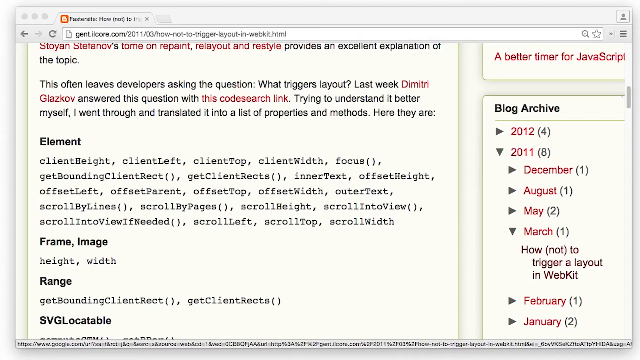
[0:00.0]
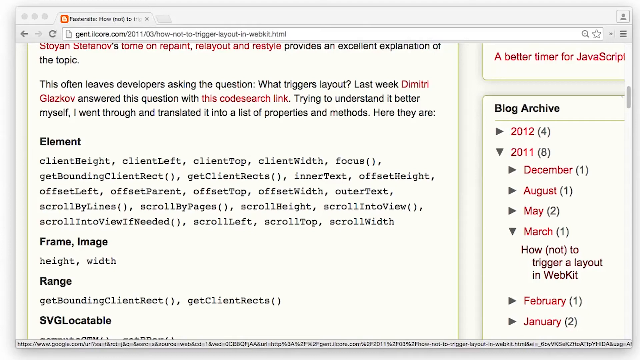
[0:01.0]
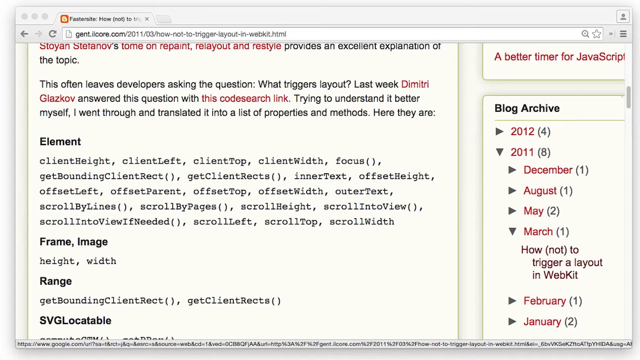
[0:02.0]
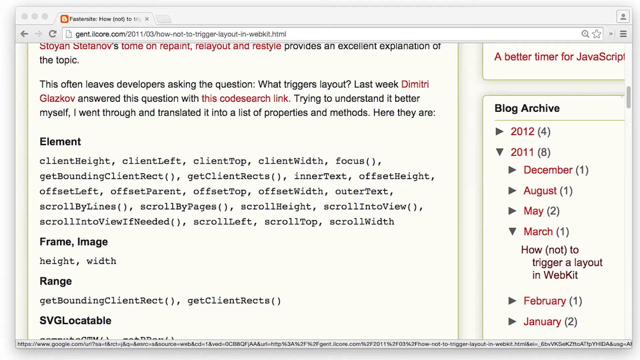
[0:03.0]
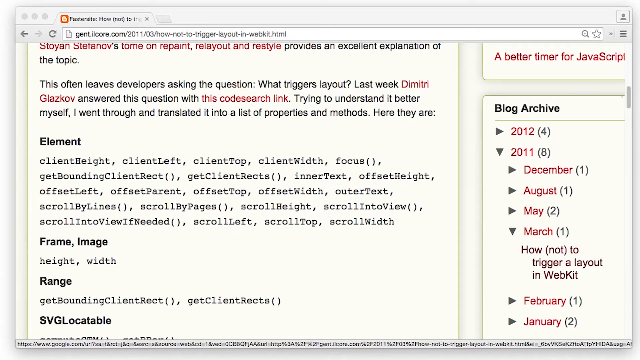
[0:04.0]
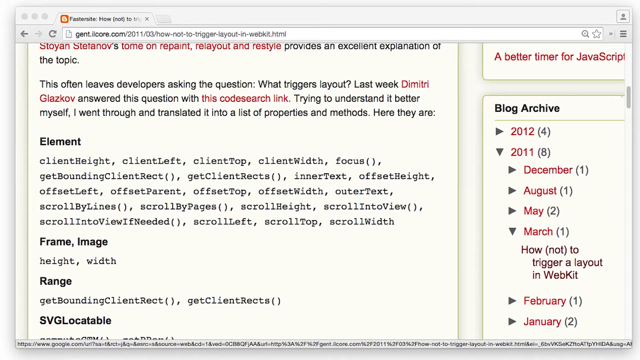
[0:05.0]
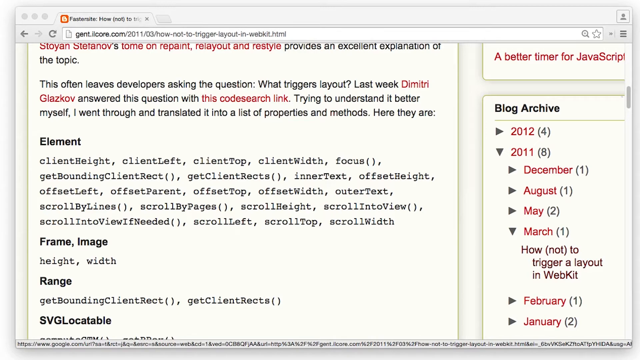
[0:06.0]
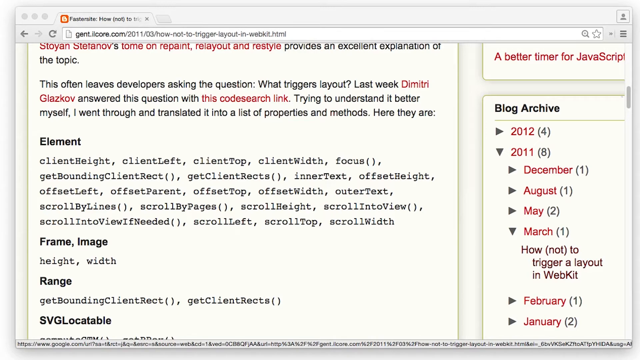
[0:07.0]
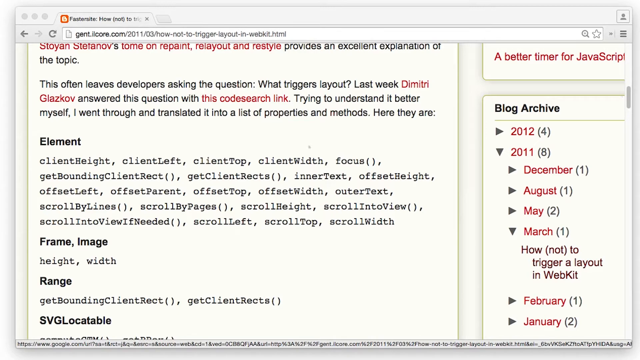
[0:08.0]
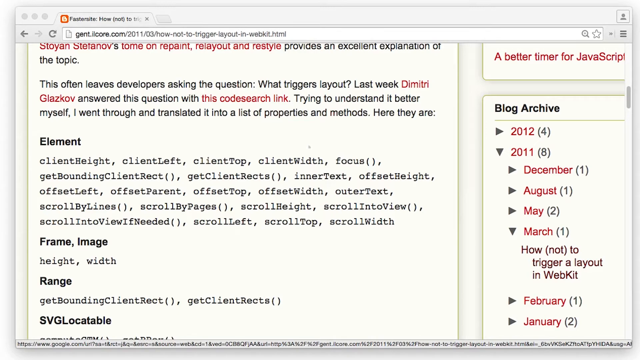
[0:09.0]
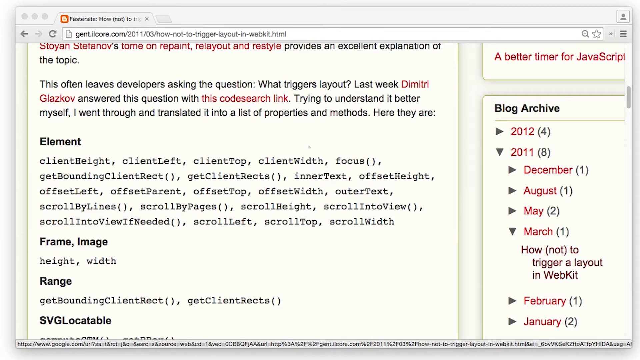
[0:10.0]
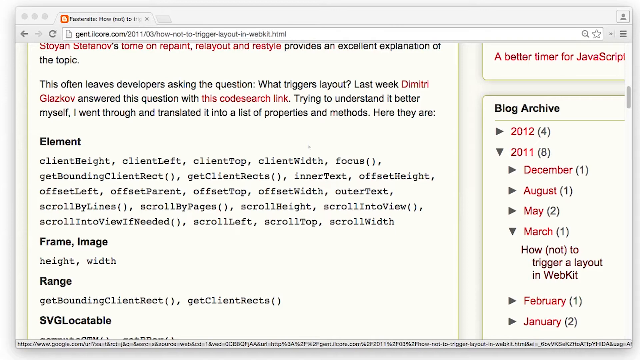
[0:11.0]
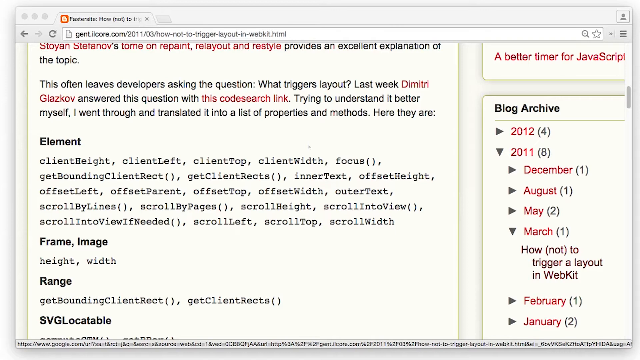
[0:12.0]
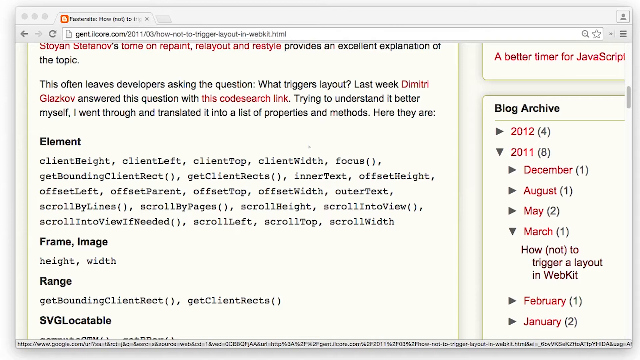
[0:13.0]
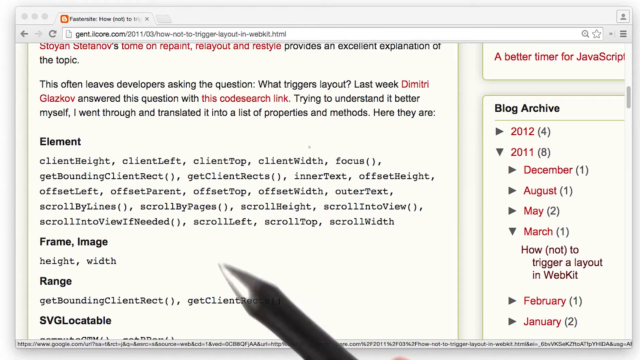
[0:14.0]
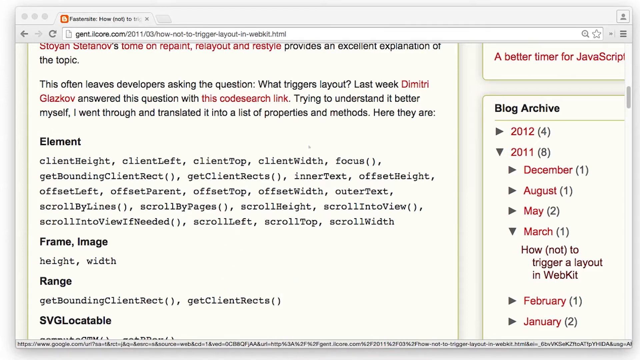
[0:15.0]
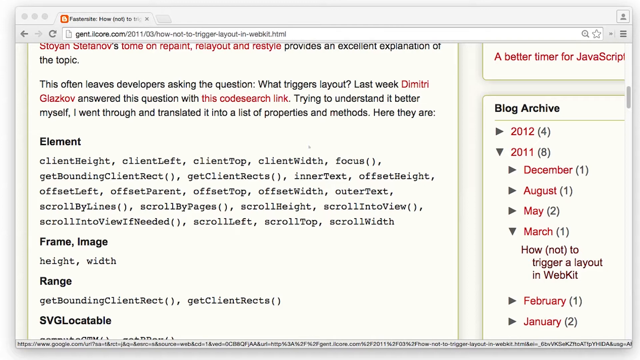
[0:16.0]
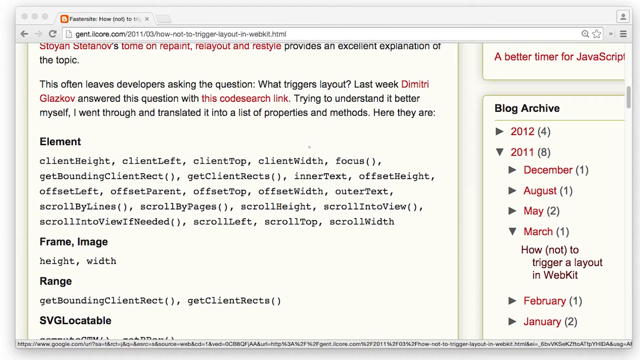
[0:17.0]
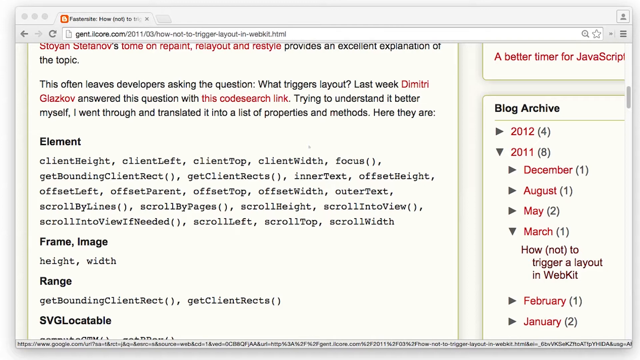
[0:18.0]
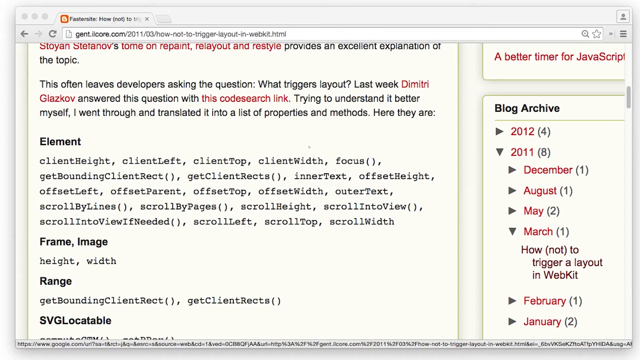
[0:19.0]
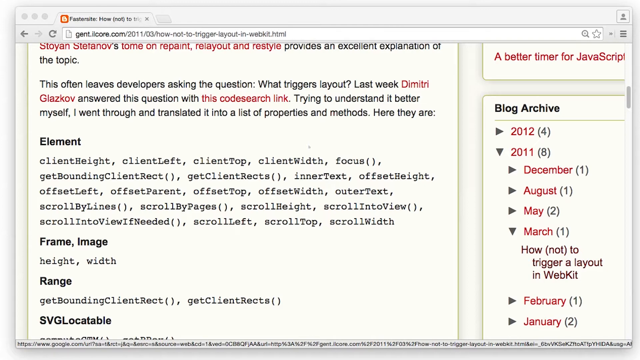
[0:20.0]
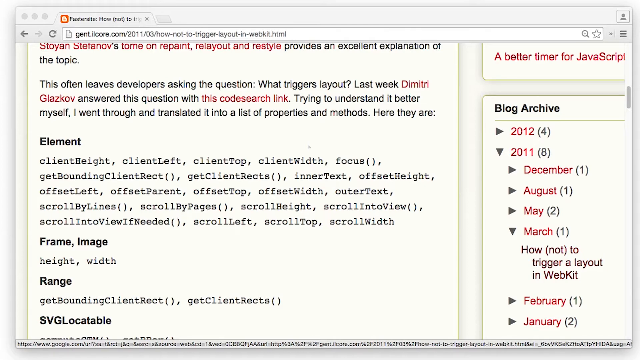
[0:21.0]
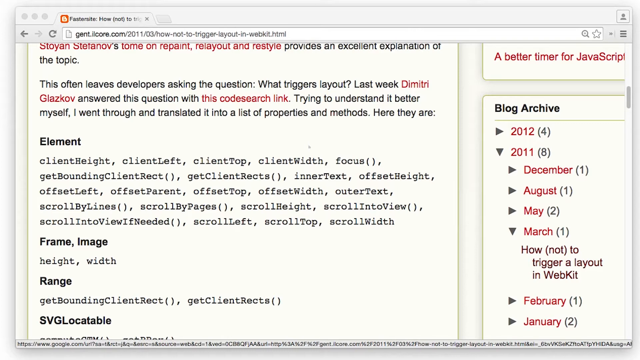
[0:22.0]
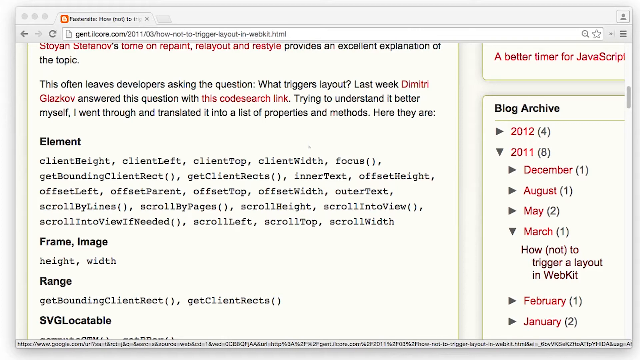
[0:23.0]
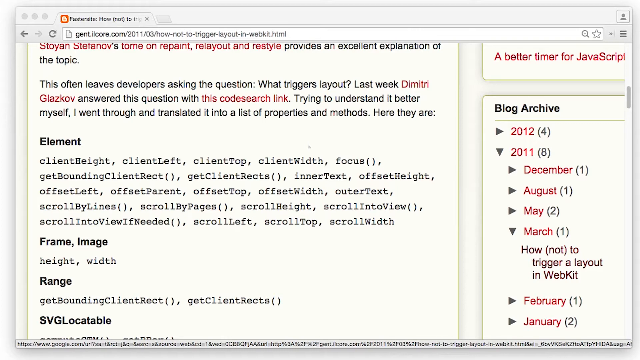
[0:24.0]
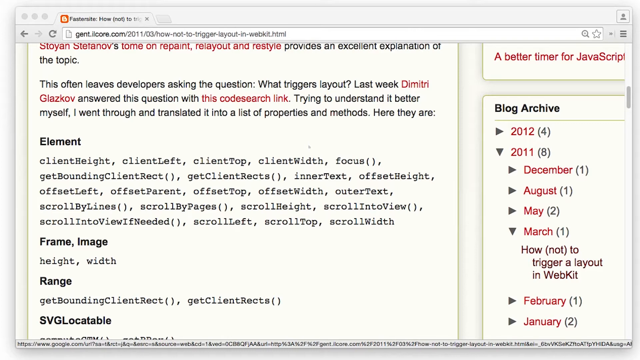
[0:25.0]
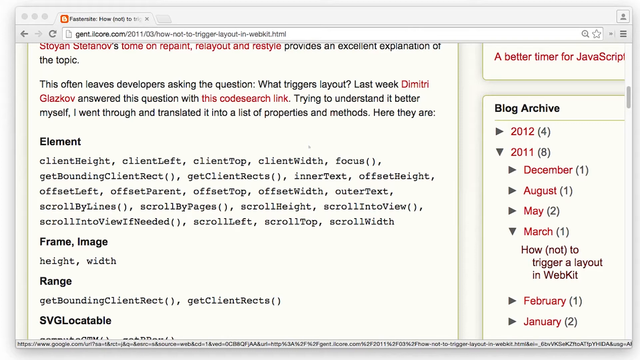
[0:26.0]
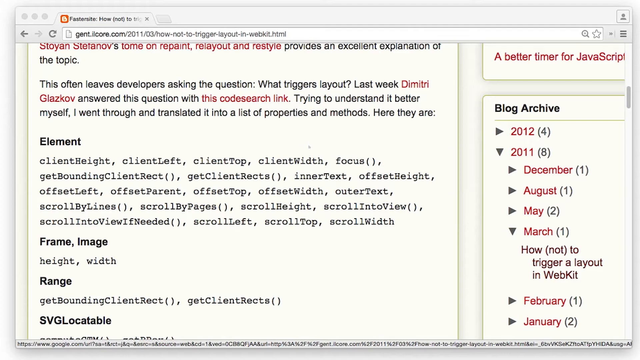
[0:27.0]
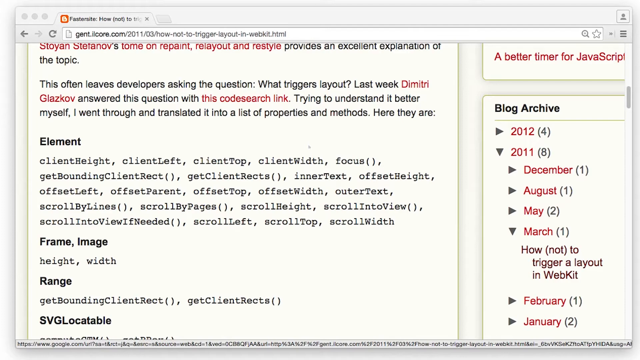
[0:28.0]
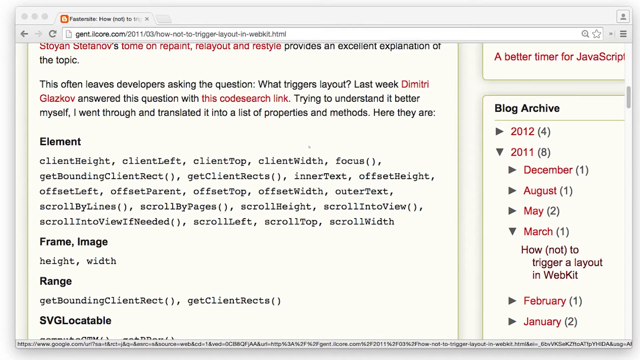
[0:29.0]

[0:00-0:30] The screen shows a blog at gent.icorps.com, with a post from March 2011 titled "How Not to Trigger a Layout in WebKit." Some of the readable text says: "this often leaves developers asking the question, what triggers layout? Last week, Dmitry Glasgowv answered the question with the code search link. Trying to understand it better myself, I went through and translated into lists of properties and methods. Here they are." Below that is a list of elements, then a list of frame and image, height and width, and below that is range. The presenter picks up a pen and is about to point at something, then stops. Next, a screen with code appears, showing the variables paragraphs and greenBlock and what appears to be a for loop that sets a new variable, blockWidth, according to greenBlock and also sets the paragraphs width.